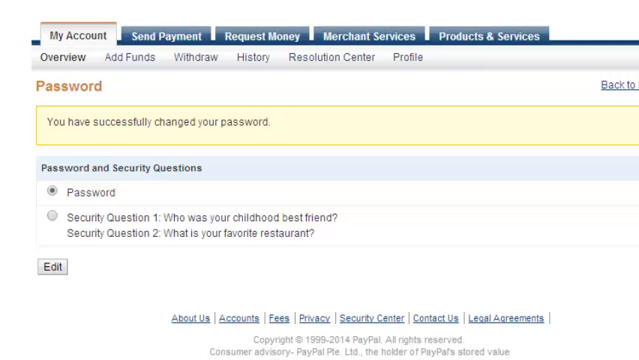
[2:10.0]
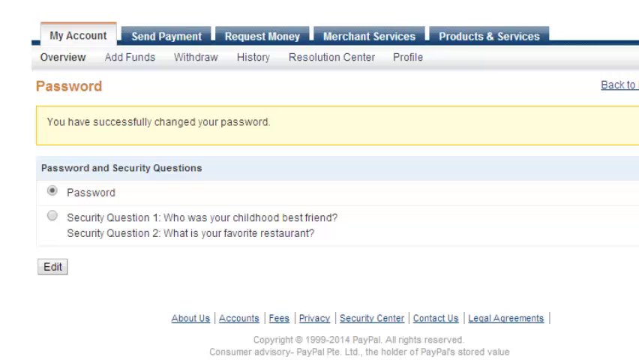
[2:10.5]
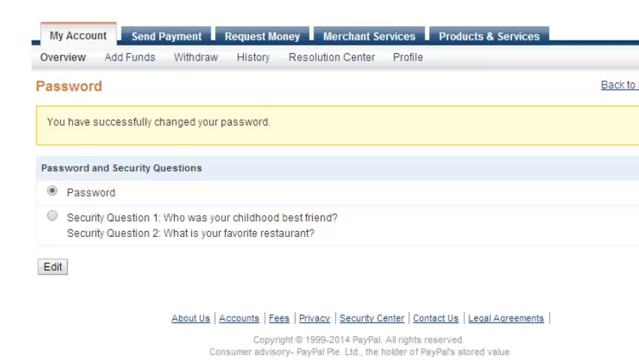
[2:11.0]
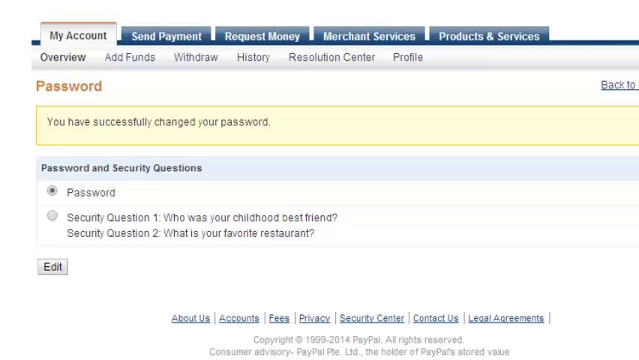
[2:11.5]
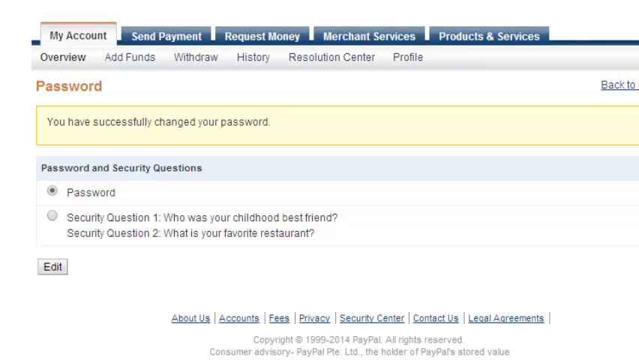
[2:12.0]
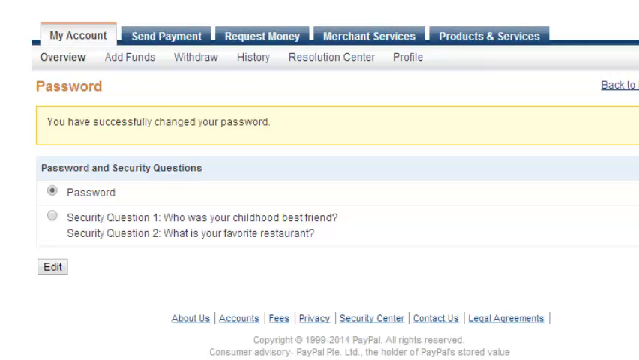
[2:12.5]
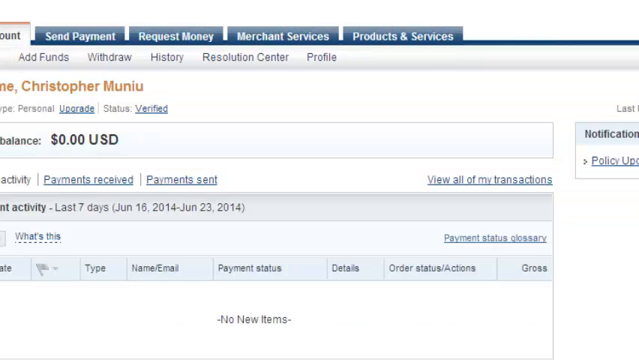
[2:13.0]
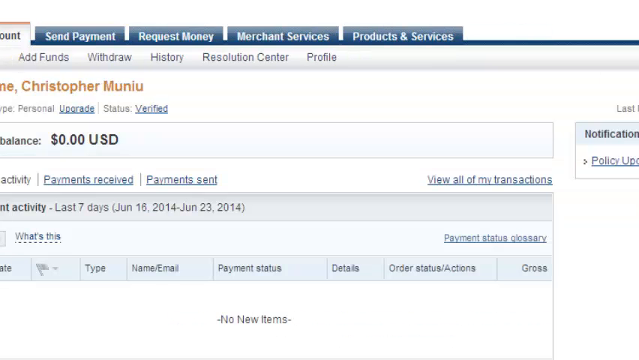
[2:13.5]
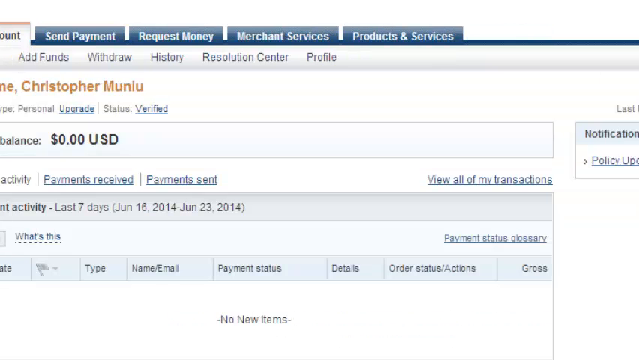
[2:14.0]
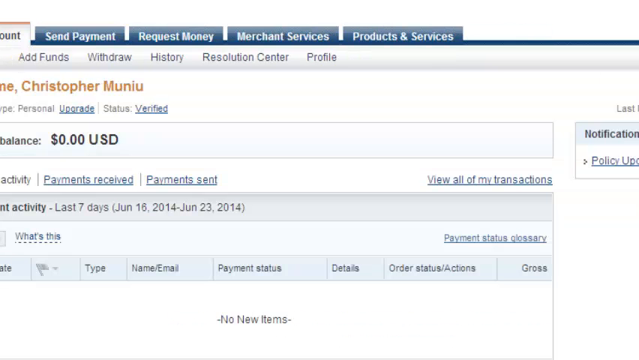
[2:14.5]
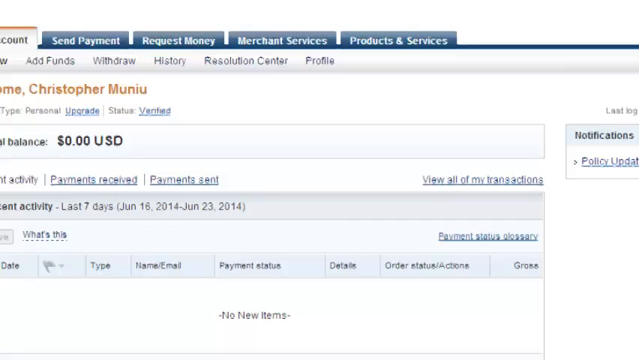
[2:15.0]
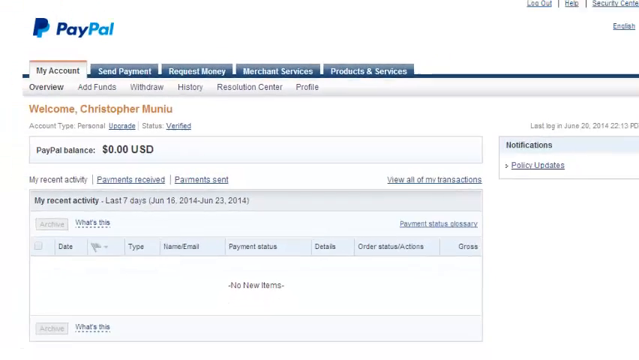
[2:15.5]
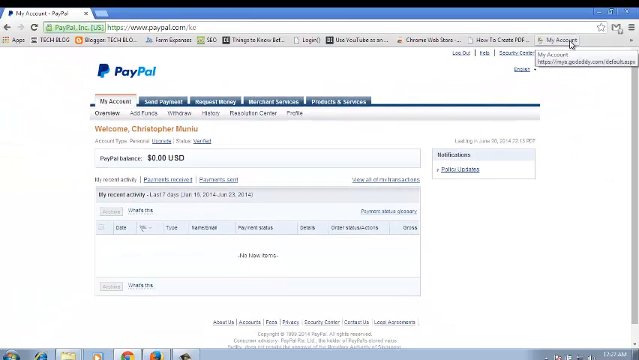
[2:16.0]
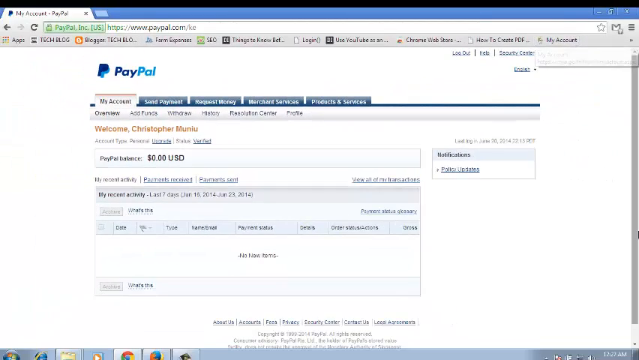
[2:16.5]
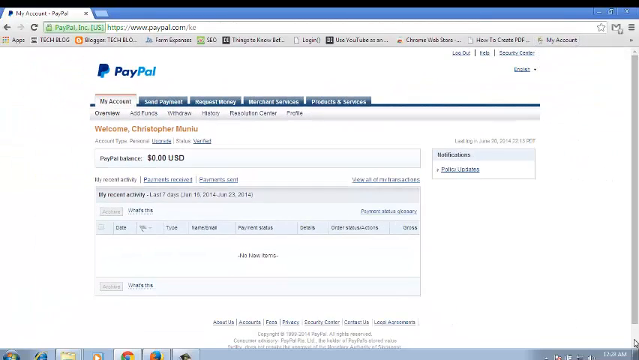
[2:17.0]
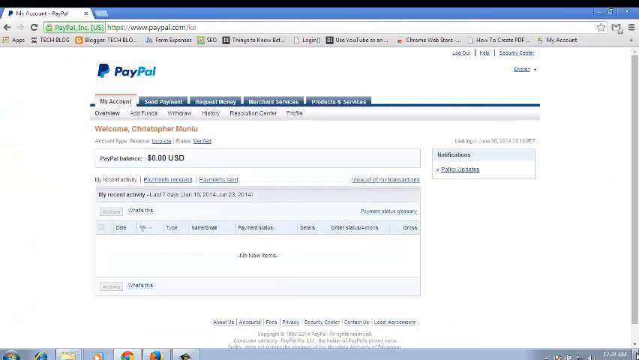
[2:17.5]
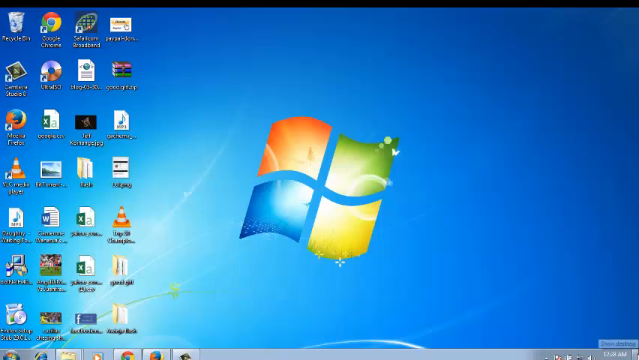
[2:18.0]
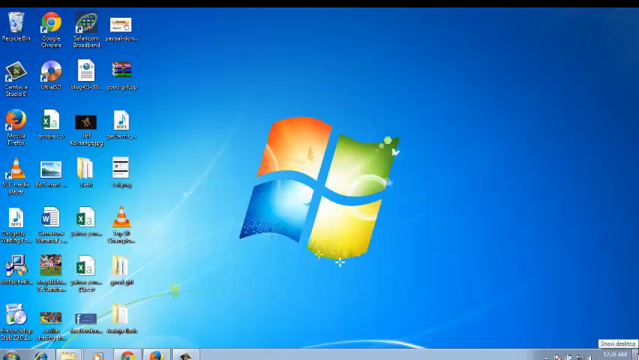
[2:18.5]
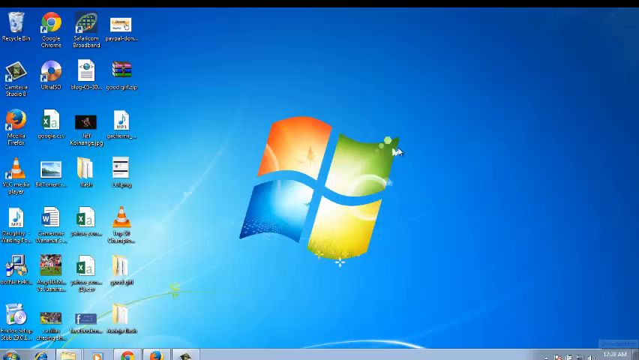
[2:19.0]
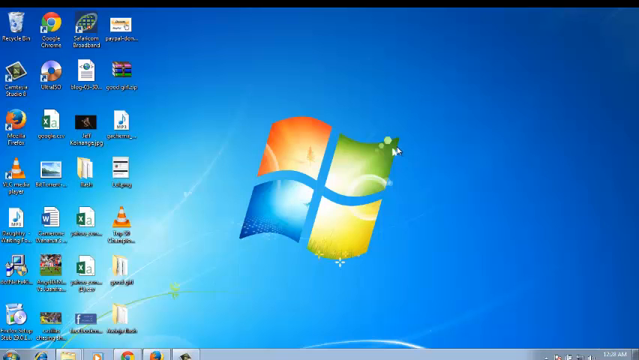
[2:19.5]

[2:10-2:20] A web page has tabs on top, where "my account" looks clicked on, in kind of a silver color; the rest of the tabs are blue. Underneath is brown text saying "password", and a box that kind of looks like a yellow highlight contains black text: "you have successfully changed your password". Below it, "password and security questions" appears as a title, followed by two radio buttons labeled "password" and "security question one", then "security question two", with two questions on the right side. Underneath is a gray edit button. It then seems to navigate to another web page with "PayPal" on top, and under the tab it says "welcome Christopher" followed by the last name, in brown, and the balance is shown. The camera seems to zoom so the whole page is visible. The person then seems to exit the web page, and the home screen with a Microsoft logo appears.